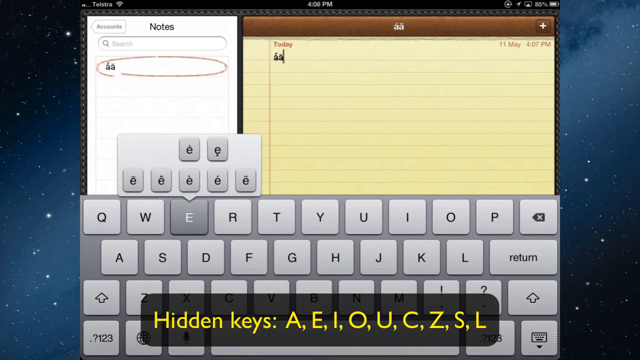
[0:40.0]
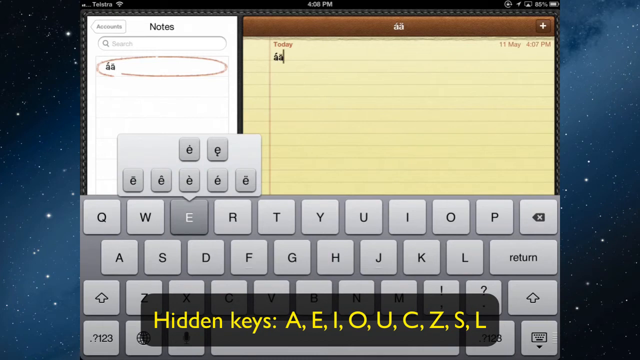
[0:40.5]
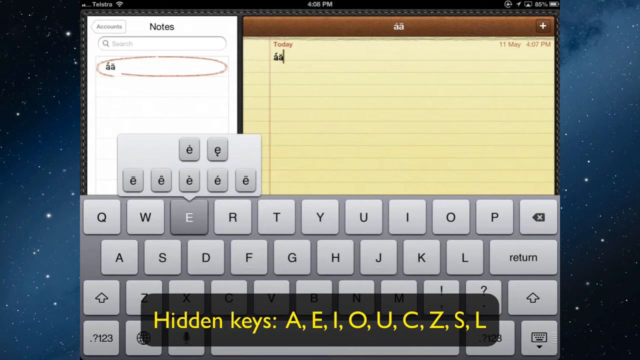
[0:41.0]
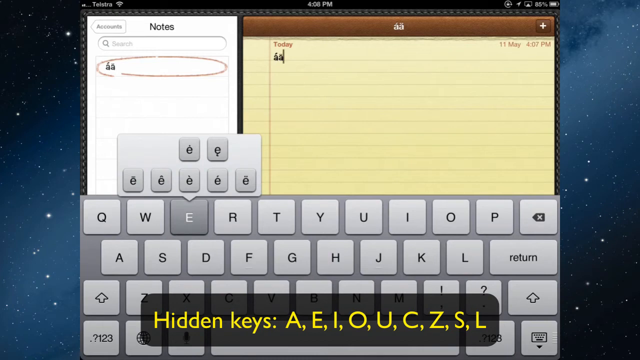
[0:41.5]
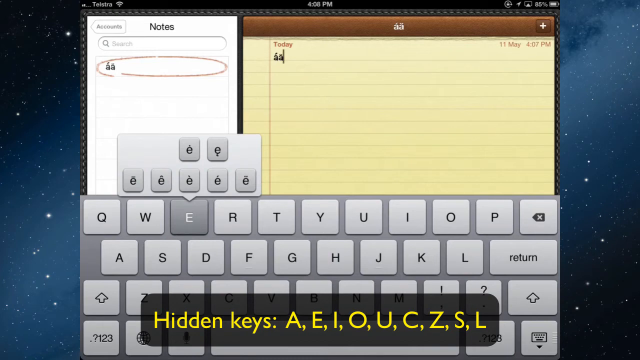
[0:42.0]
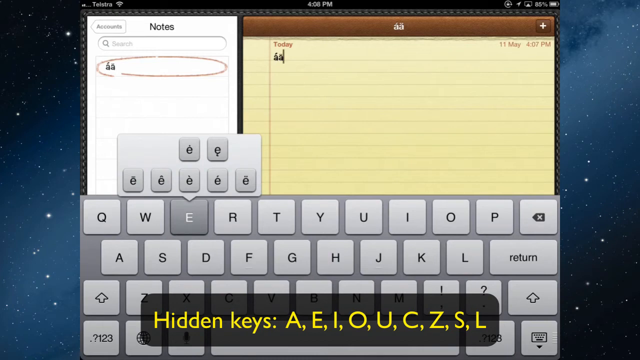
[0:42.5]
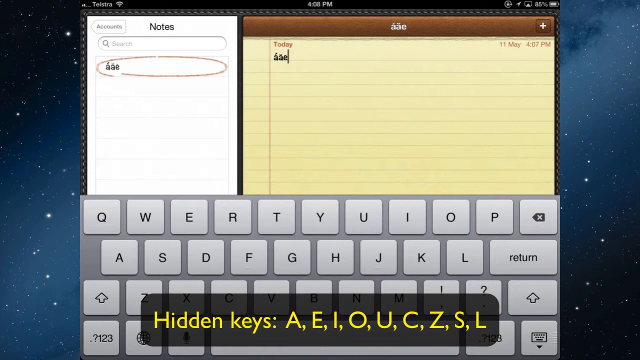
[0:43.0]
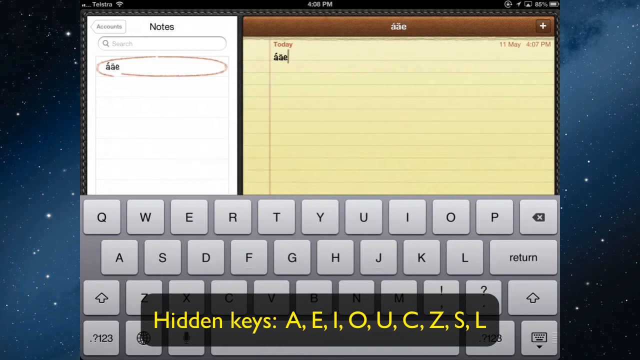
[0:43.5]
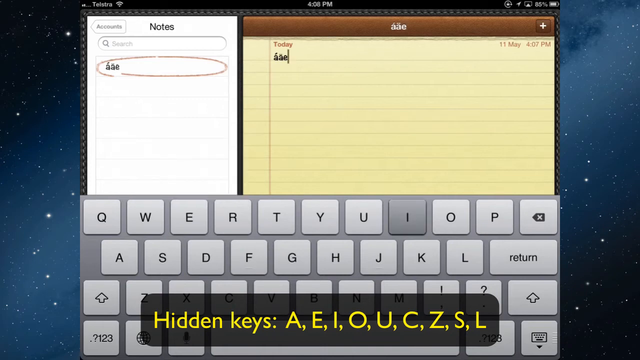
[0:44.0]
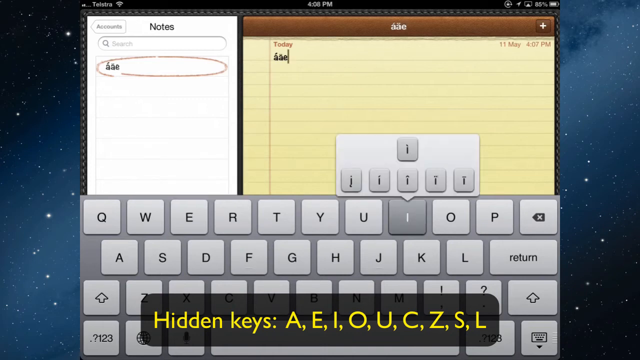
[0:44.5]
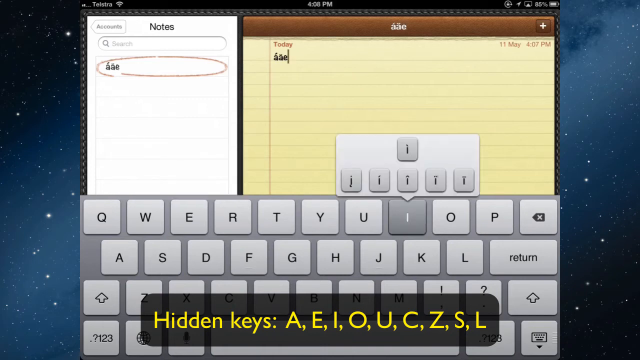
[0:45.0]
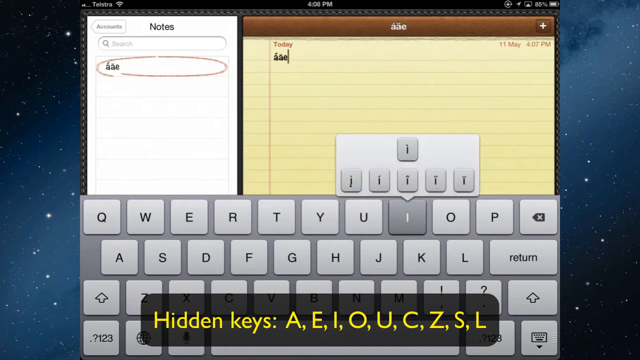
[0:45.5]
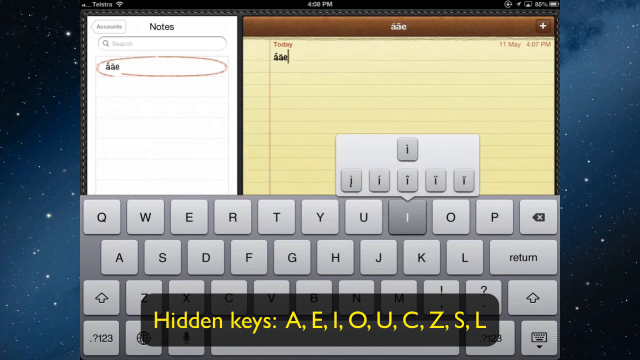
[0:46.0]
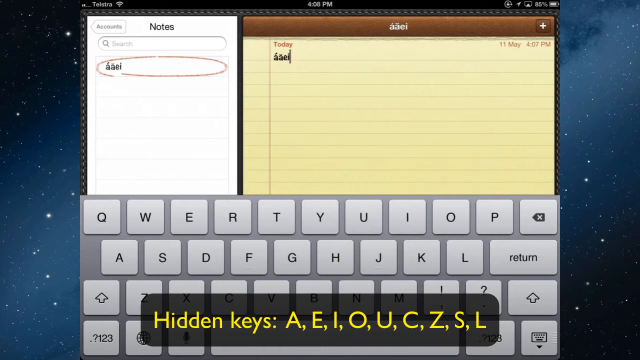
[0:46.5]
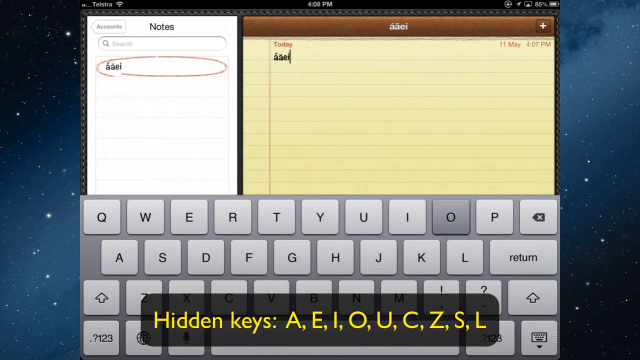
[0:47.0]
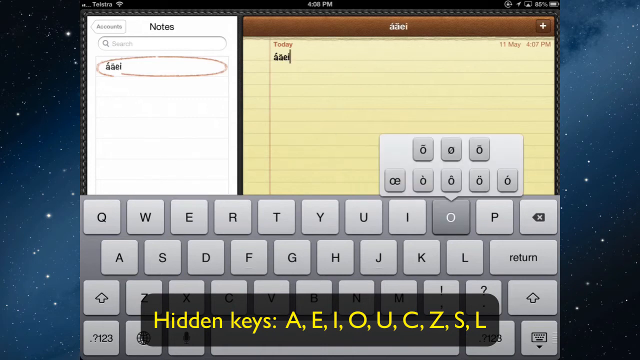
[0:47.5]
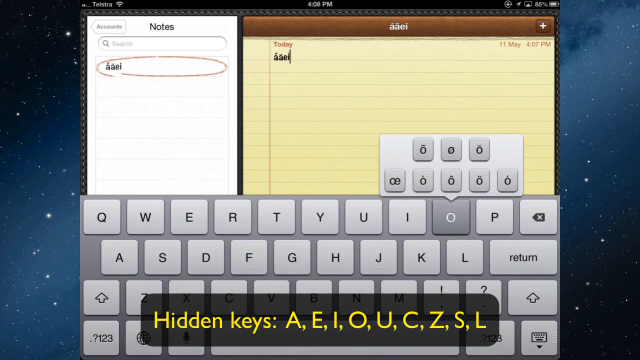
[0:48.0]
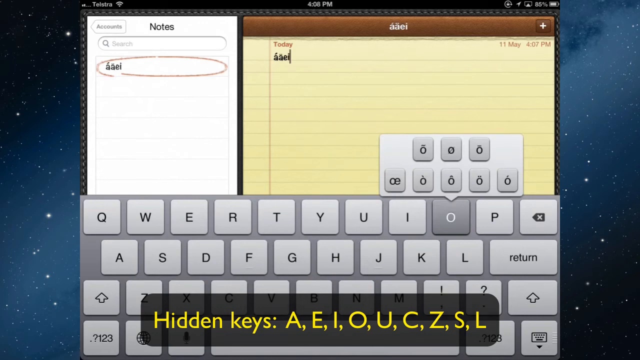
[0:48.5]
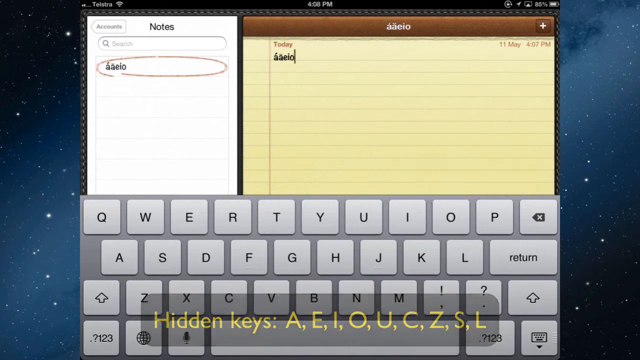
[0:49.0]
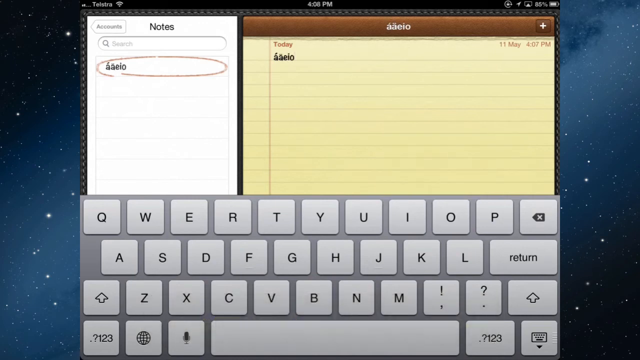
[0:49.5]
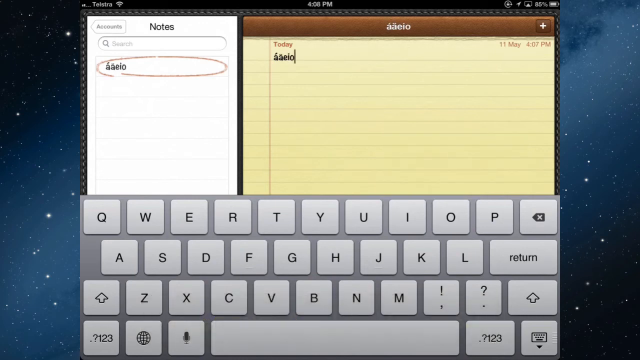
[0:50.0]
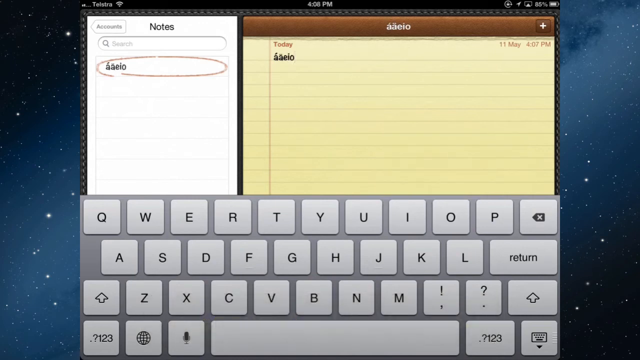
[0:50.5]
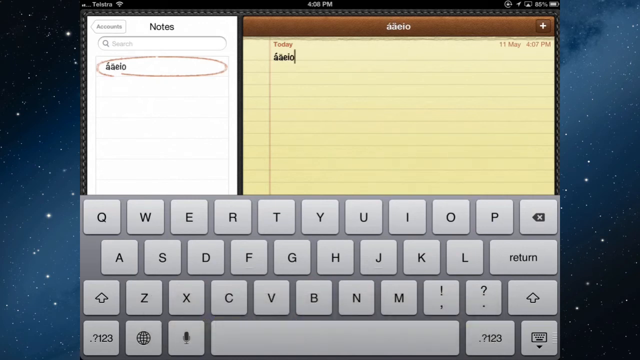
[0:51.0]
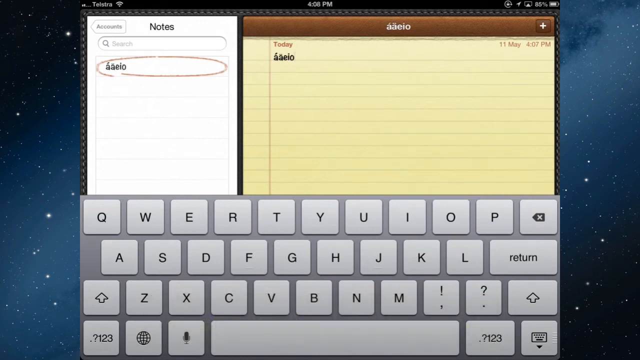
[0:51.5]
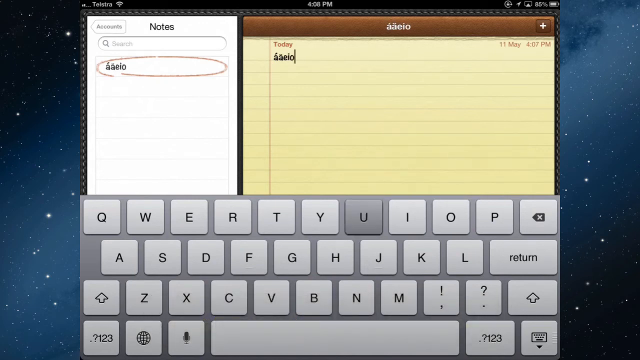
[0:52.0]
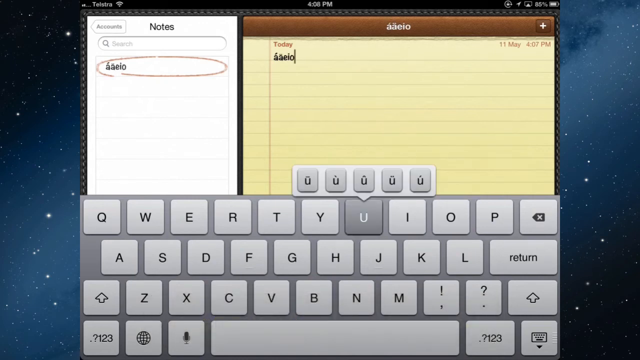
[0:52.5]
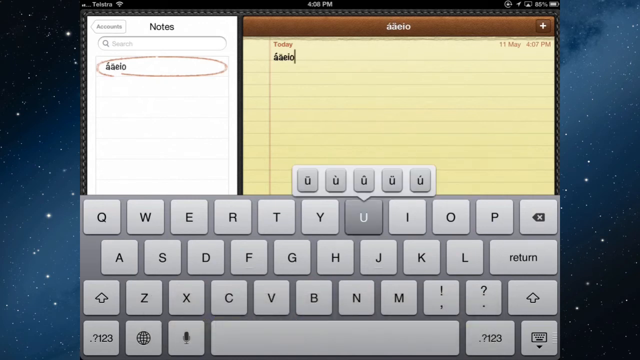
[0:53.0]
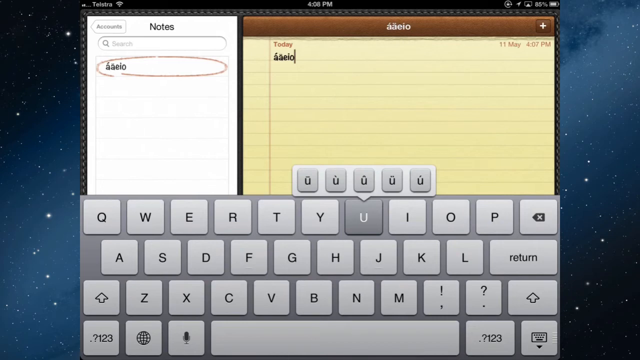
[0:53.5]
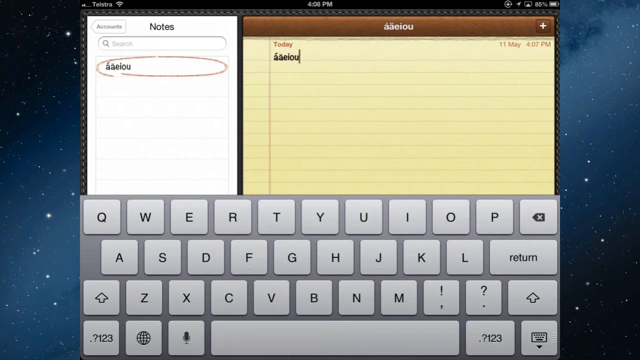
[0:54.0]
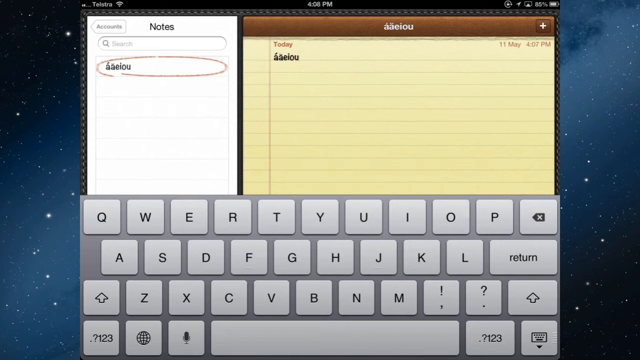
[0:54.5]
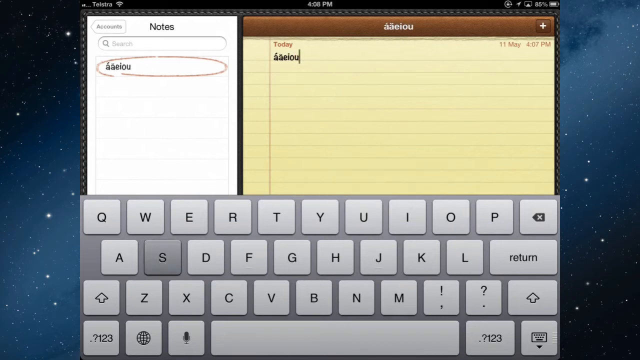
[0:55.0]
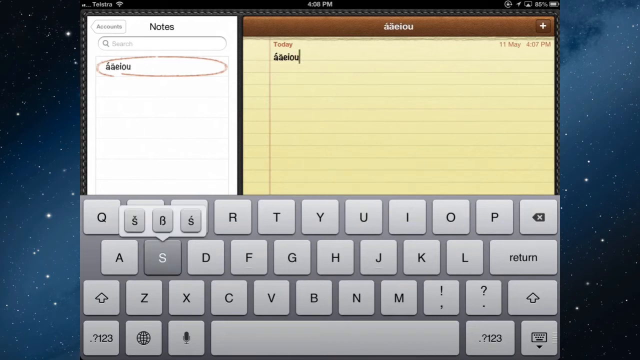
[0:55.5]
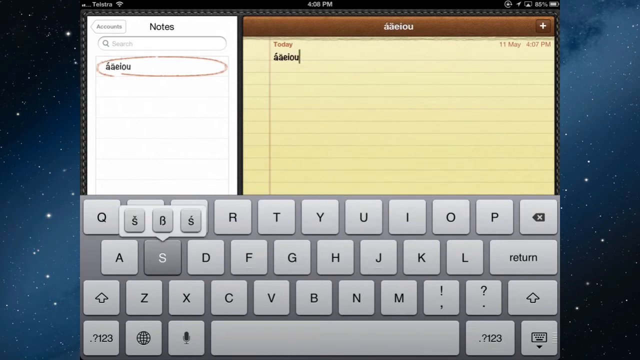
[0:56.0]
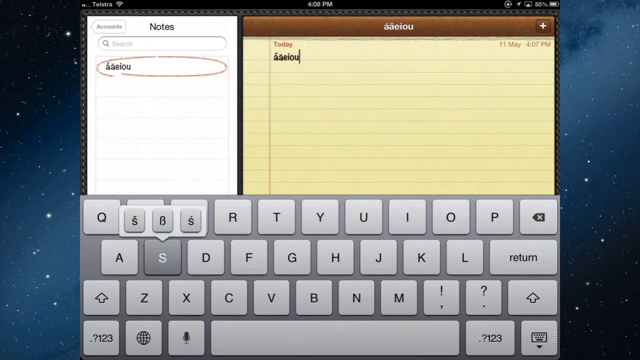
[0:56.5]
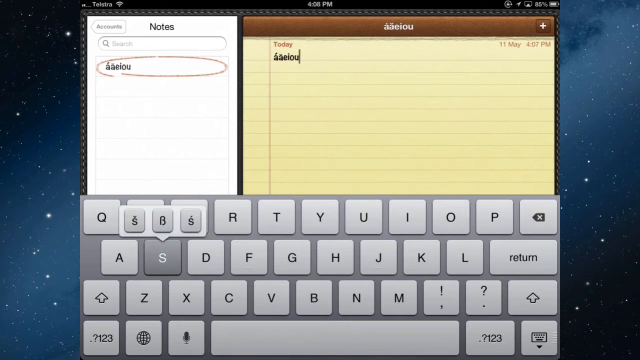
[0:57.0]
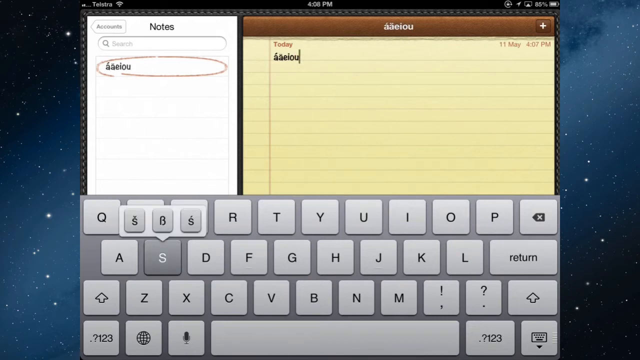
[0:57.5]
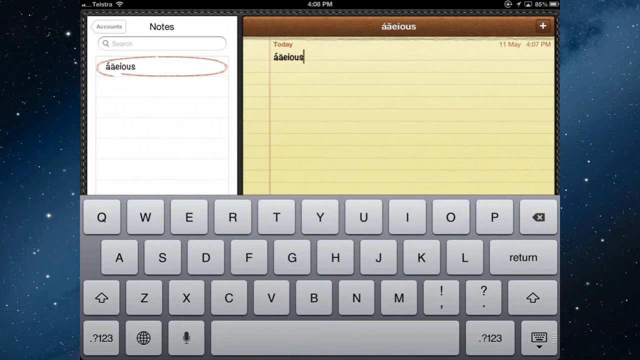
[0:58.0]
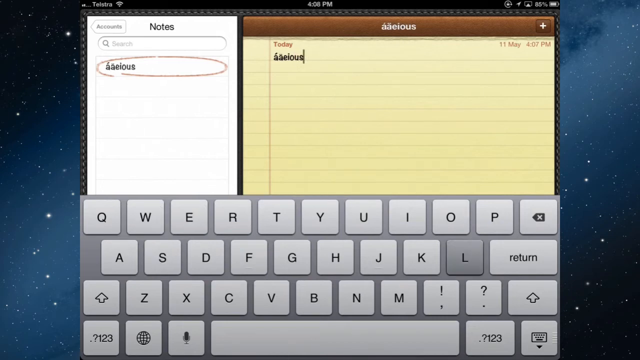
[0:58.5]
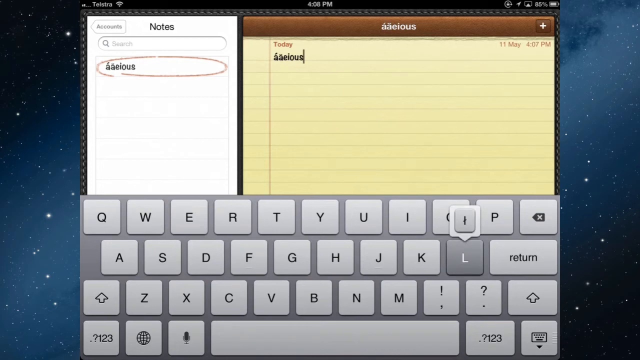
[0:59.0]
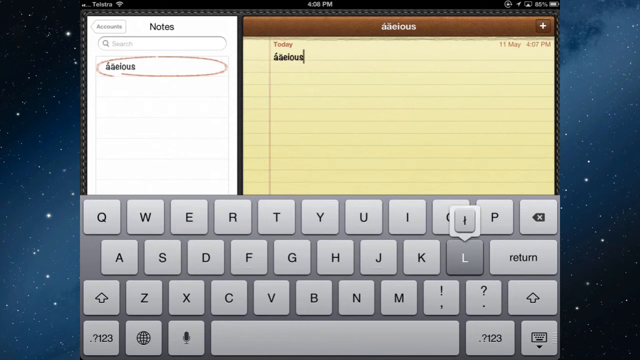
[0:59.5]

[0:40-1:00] An animated notepad with yellow pages is shown, with another notepad with smaller white pages on the left side and a gray keyboard below. The letter E has been selected, and a pop-up above the E shows many different types of E's with different lines on top. At the bottom of the screen yellow text reads "hidden keys" and goes through all the vowels, along with the letters C, Z, S, and L. The user seems to select a few of the letters, and the selected ones are written on the yellow notepad. Then the user selects O and a menu pops out, selects U and another menu pops out, then S and a menu pops out, and then L and another menu pops out. The top of the yellow notepad has a brown border.